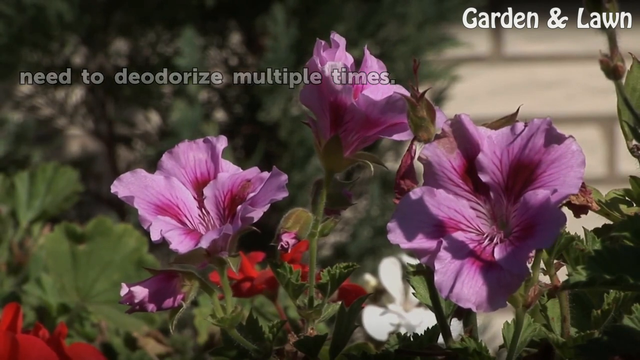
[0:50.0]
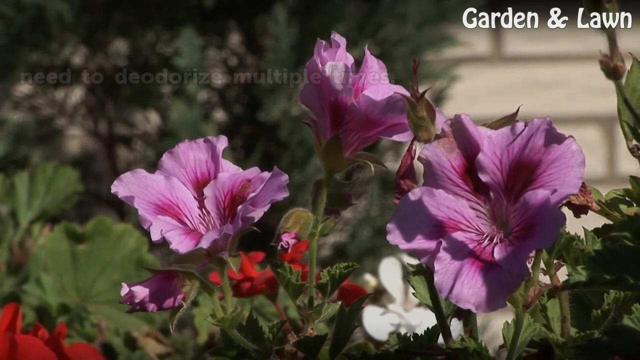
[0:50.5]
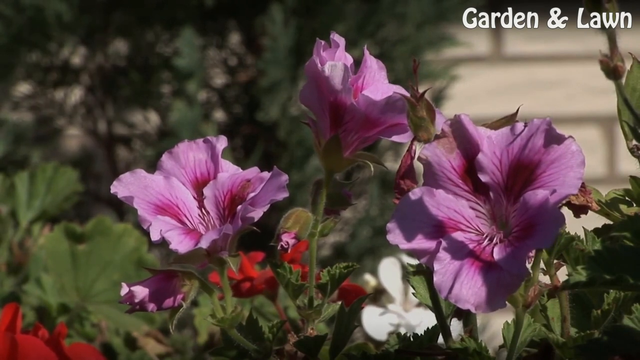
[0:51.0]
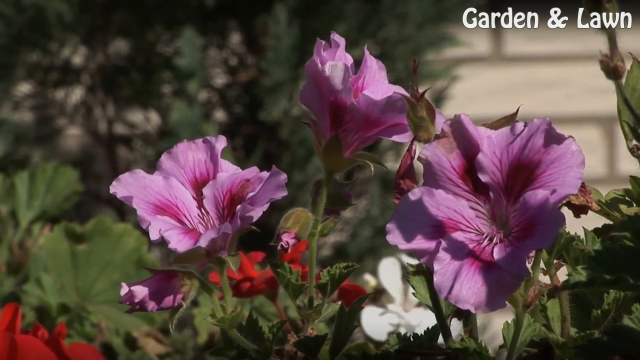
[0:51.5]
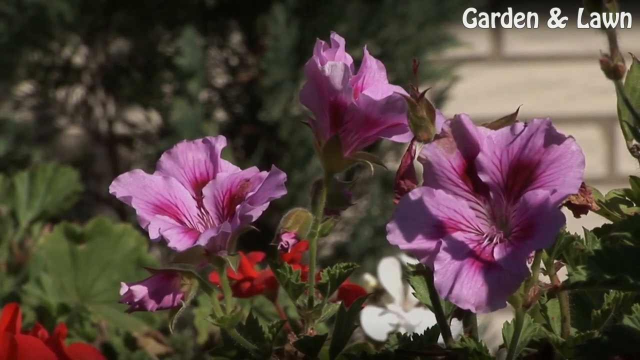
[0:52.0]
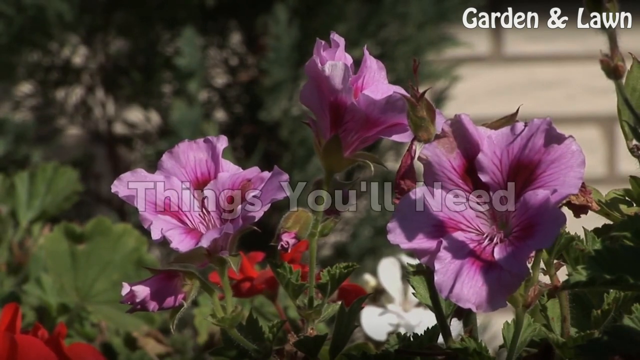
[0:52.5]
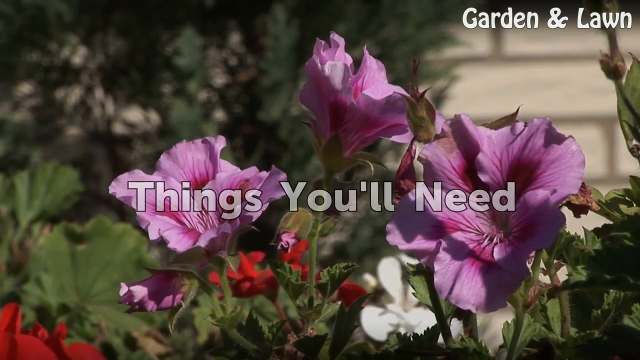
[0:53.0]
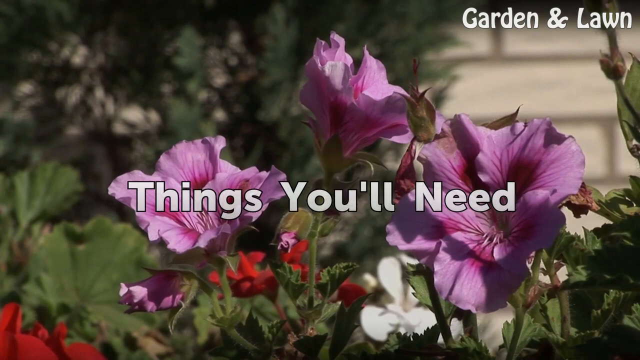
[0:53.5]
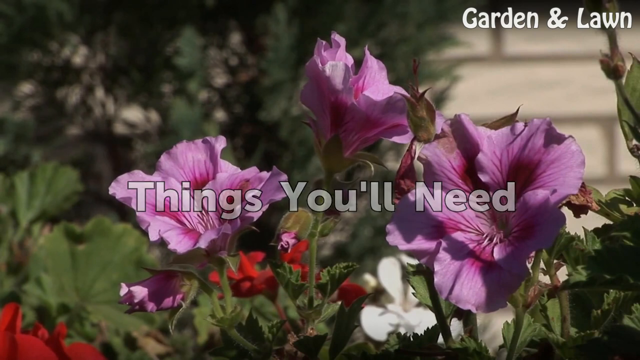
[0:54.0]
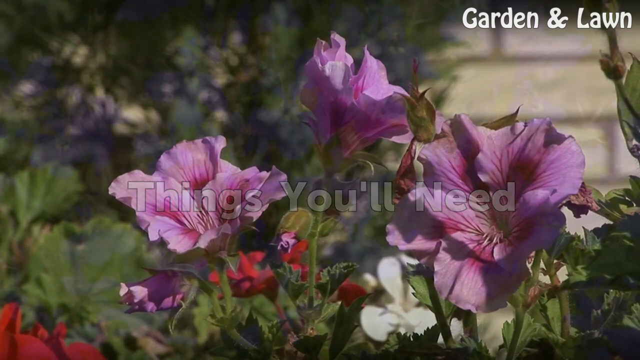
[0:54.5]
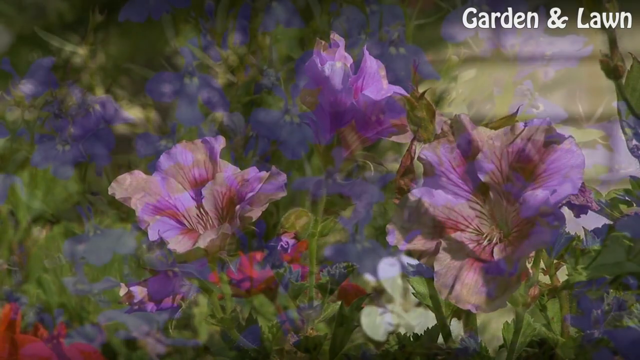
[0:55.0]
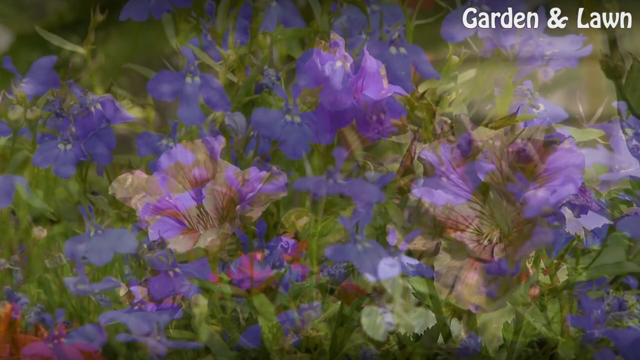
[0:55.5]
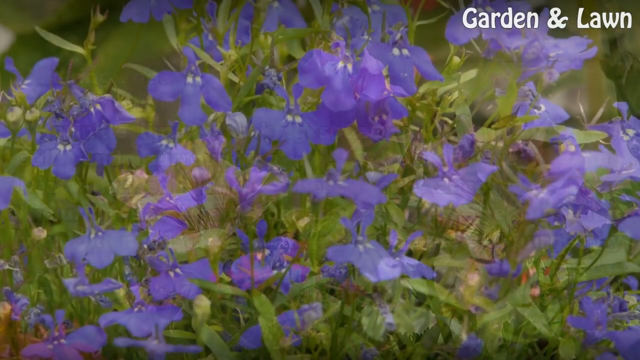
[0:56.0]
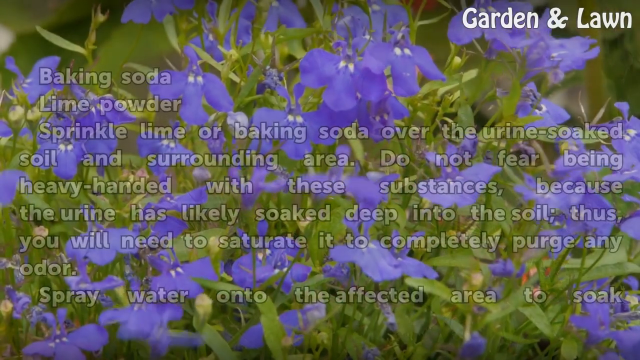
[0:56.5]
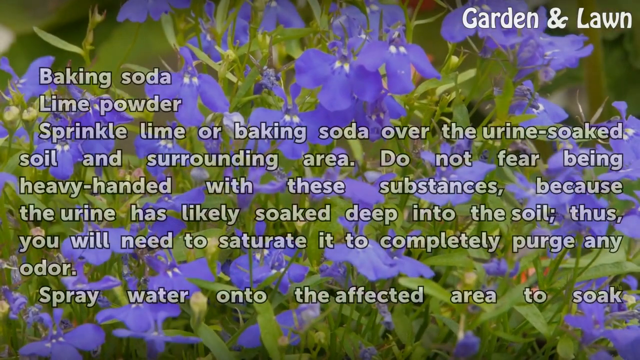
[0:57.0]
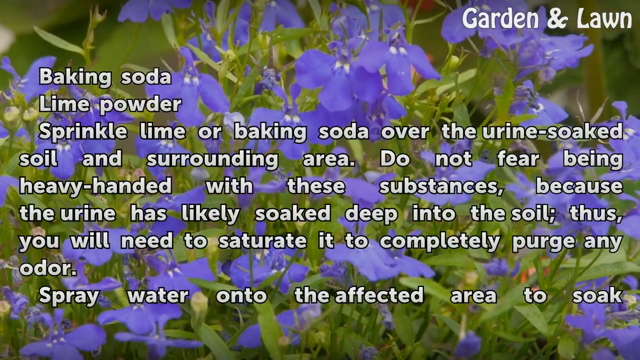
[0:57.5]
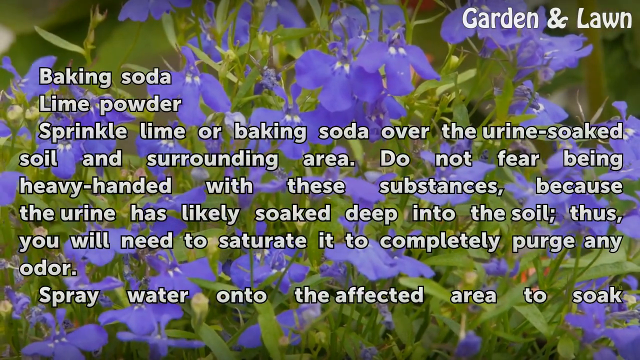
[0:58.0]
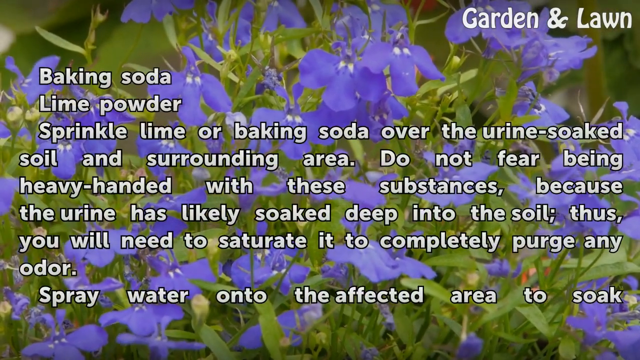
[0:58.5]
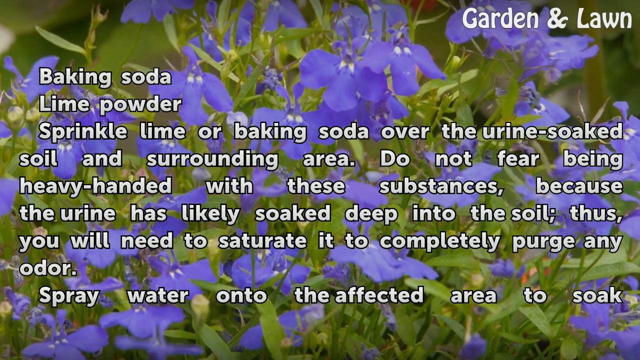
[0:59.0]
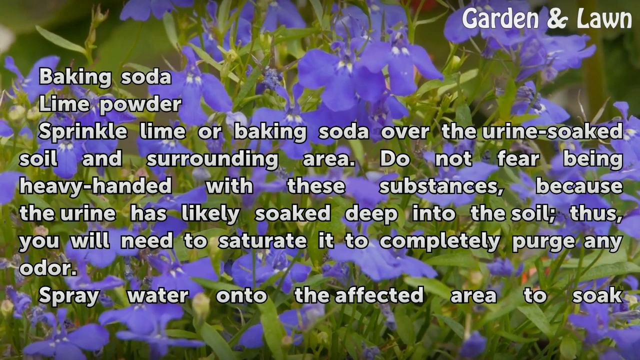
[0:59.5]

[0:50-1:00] Behind the purple plant, not far away, is a white brick wall of some kind with some darker gray. A little green leaf comes up, and right in front of it a curved stem comes out and up, bearing a small, spiky, maroon-colored bud of some kind. The text about deodorizing goes away, and white text reading "things you'll need" appears, centered over the three clusters of pink flowers in the middle. The text and the picture fade away, and a list of needed items starts on the left, spaced slightly from the top left: "baking soda" on the first line, "lime powder" on the next, and then "sprinkle lime or baking soda over the urine soaked soil." More text is about being heavy-handed and not being able to use too much, and says the urine probably soaks deep into the soil, so a lot of baking soda or lime is needed. Behind the text, the wind blows a bunch of purplish-blue flowers all around; they look like they have about four petals each, and the leaves between them almost look like thick grasses.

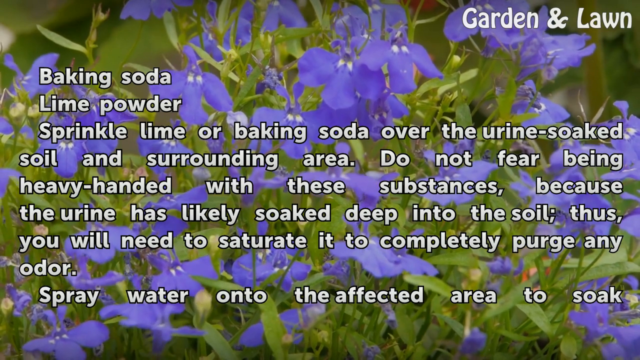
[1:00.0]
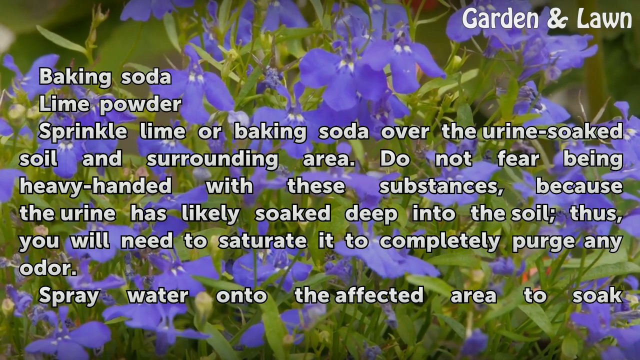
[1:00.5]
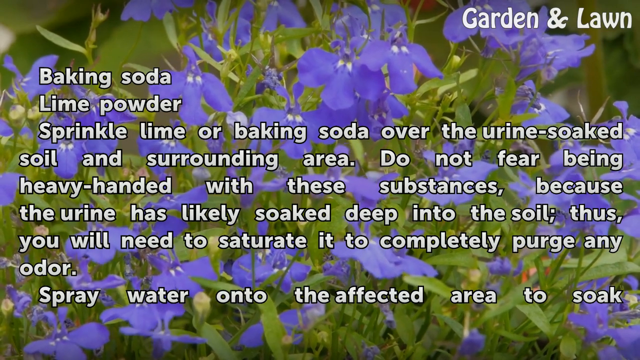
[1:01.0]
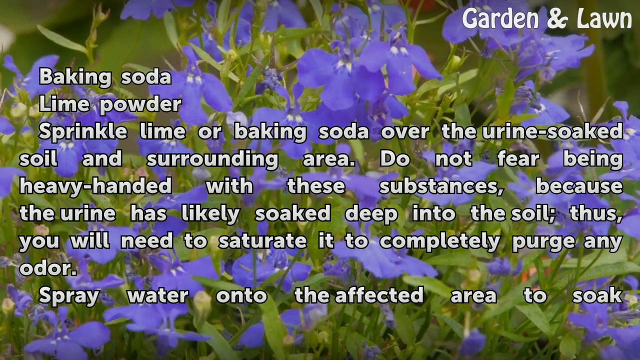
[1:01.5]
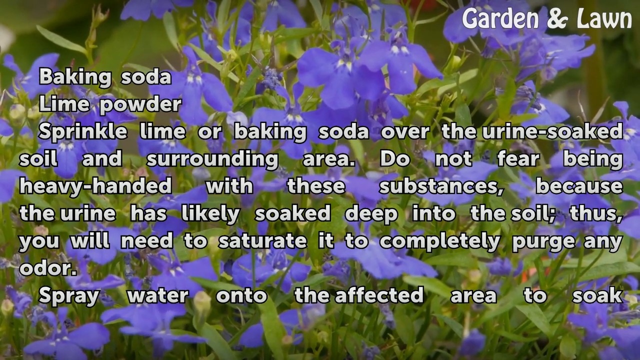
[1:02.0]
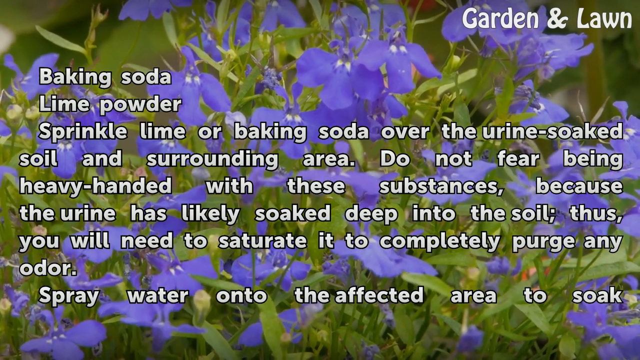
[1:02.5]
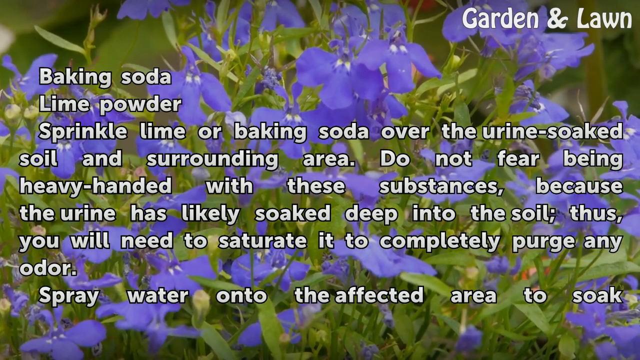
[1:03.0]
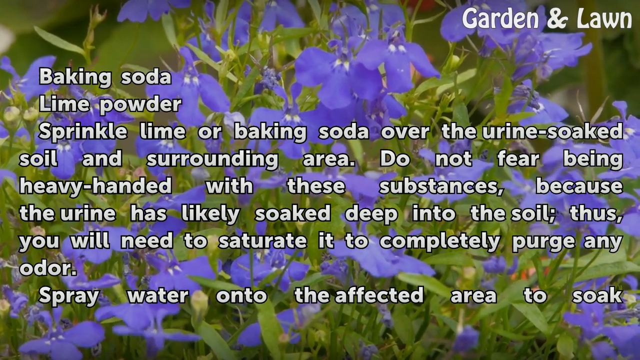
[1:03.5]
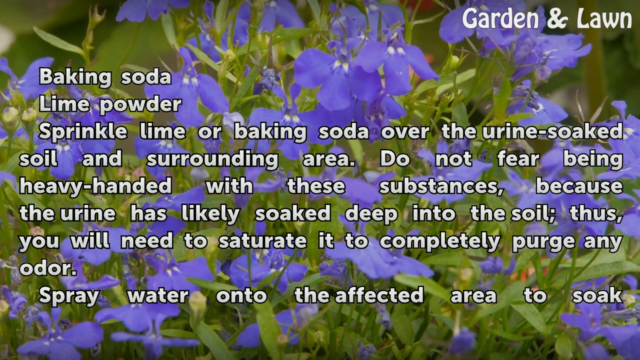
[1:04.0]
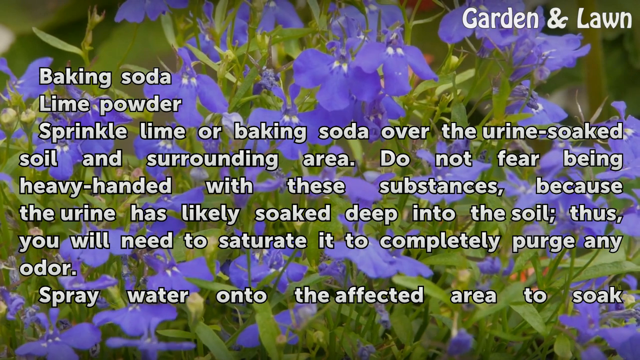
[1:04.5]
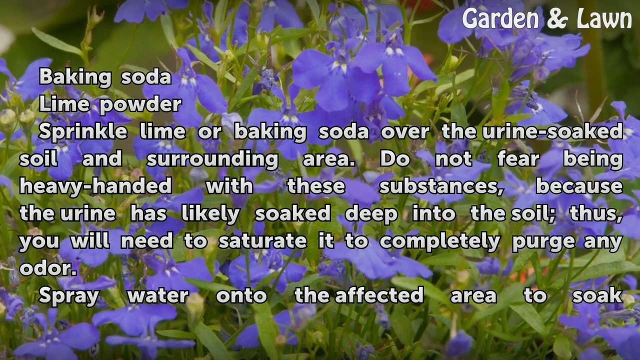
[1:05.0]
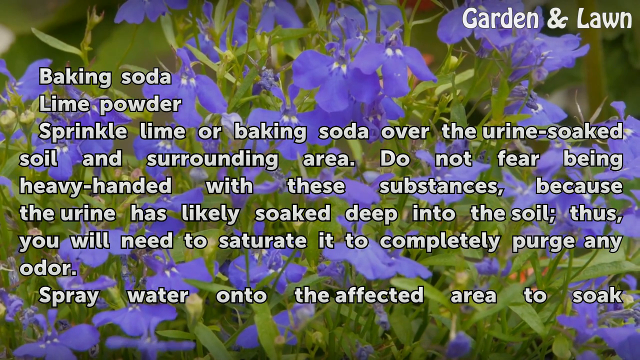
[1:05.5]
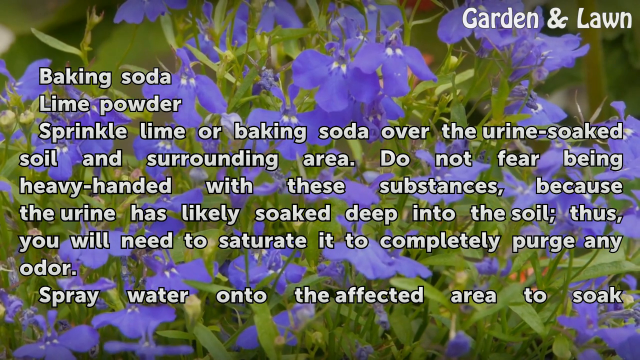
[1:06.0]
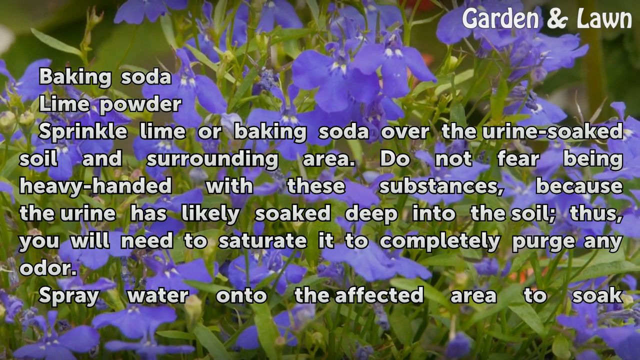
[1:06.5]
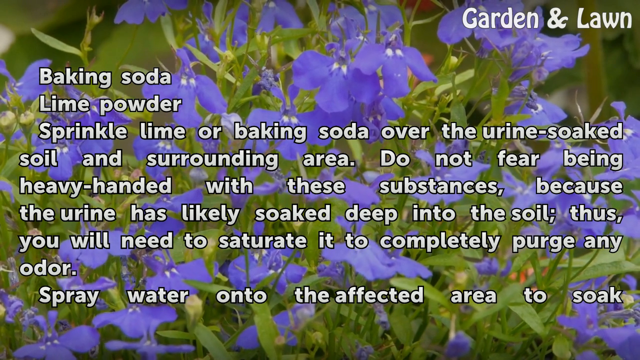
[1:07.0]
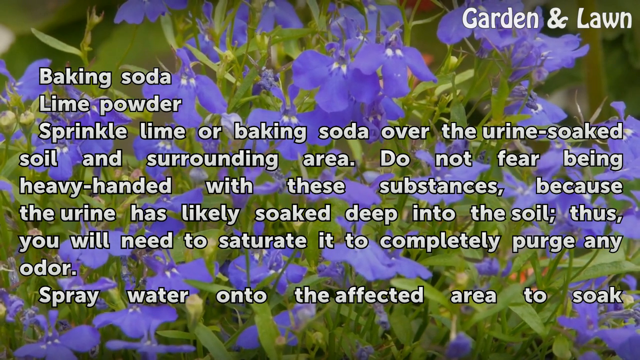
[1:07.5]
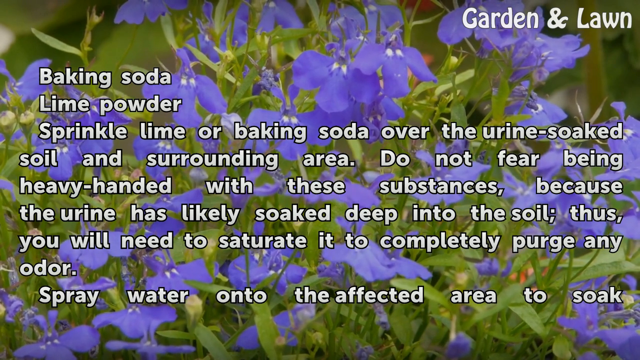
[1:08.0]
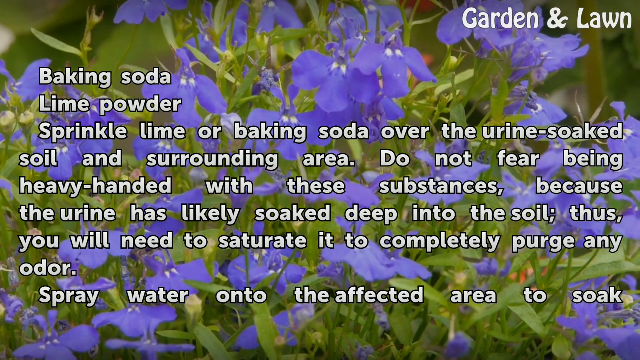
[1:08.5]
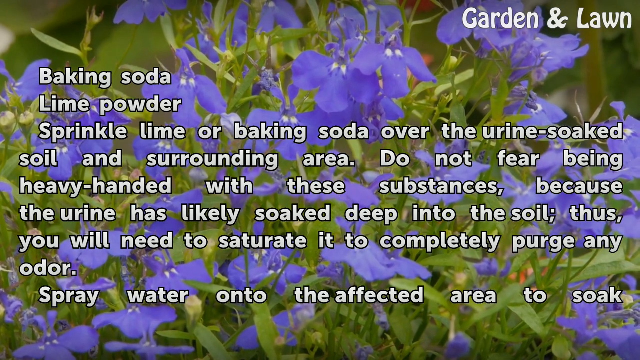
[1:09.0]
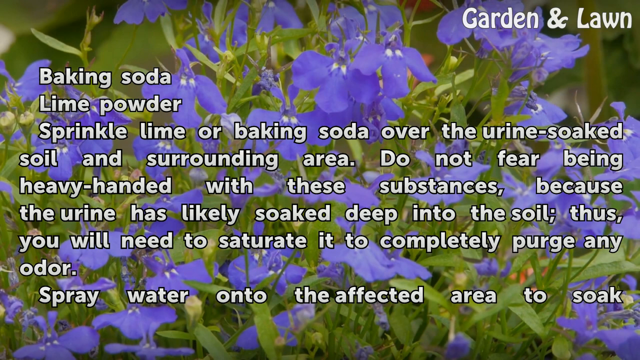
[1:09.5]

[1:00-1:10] The "garden lawn" text at the top has no outline and is just white, whereas the centered lines listing the things needed are white with a black outline around each letter. The wind blows the flowers slightly left and right, jostling some at the bottom in the middle, but not the flowers toward the distance. Baking soda and lime powder are on the first two lines, and underneath are five lines of text running from left to right. The beginning of the sprinkle sentence is indented, in line with baking soda and lime powder, and "spray water" is by itself at the bottom, indented the same way.